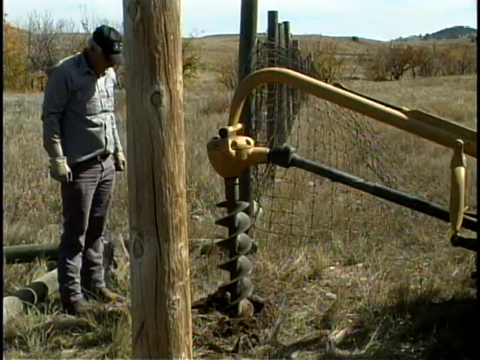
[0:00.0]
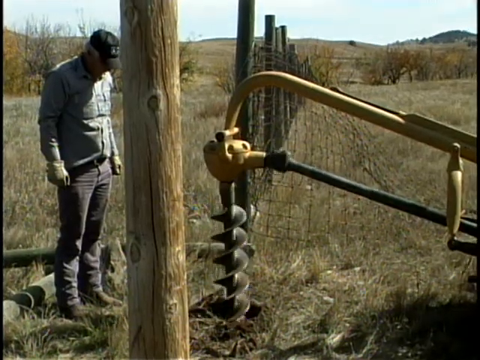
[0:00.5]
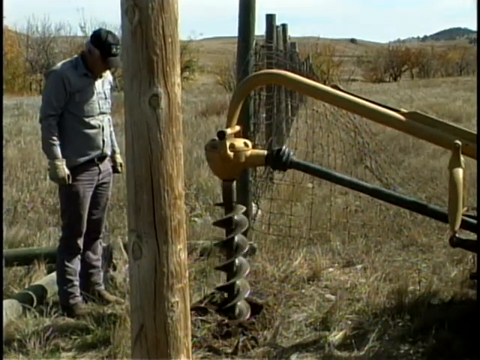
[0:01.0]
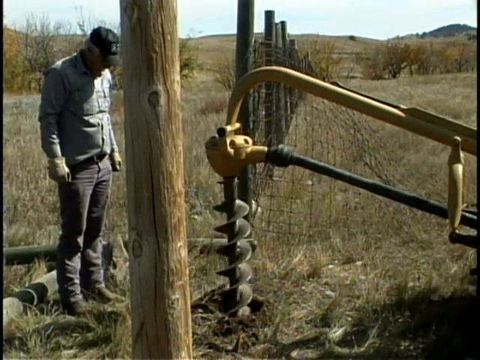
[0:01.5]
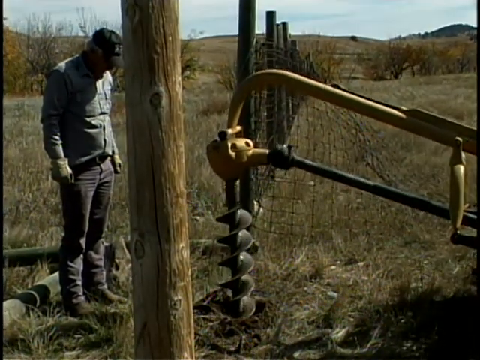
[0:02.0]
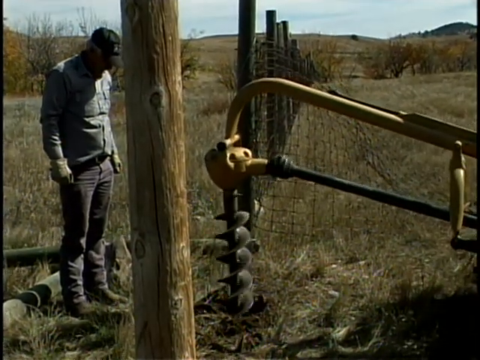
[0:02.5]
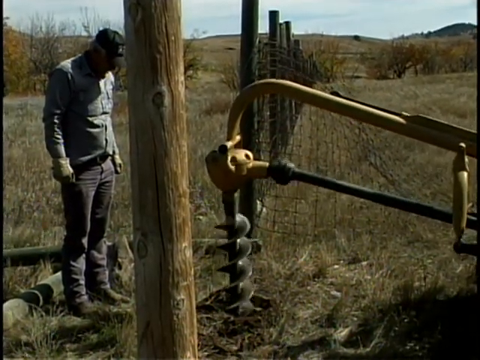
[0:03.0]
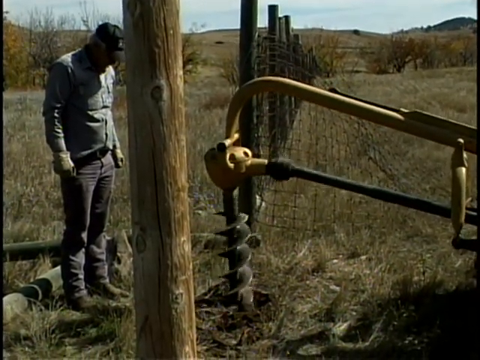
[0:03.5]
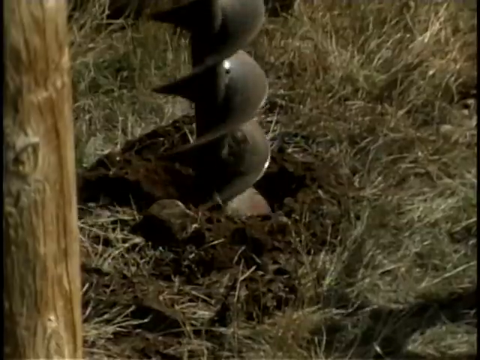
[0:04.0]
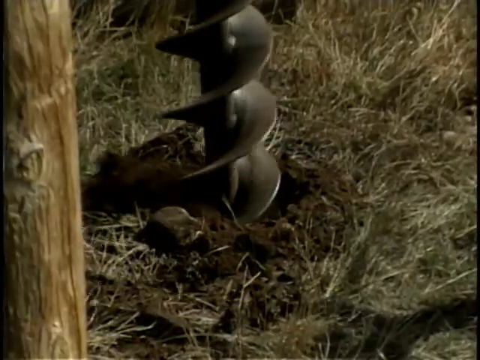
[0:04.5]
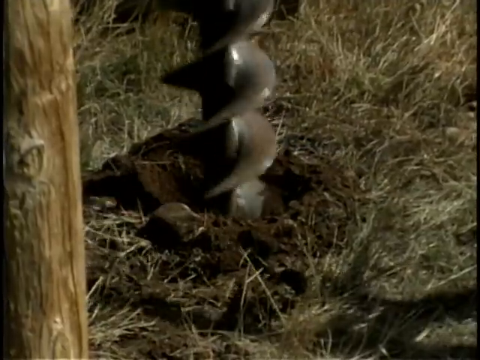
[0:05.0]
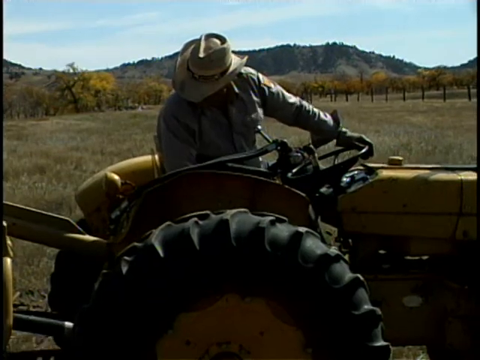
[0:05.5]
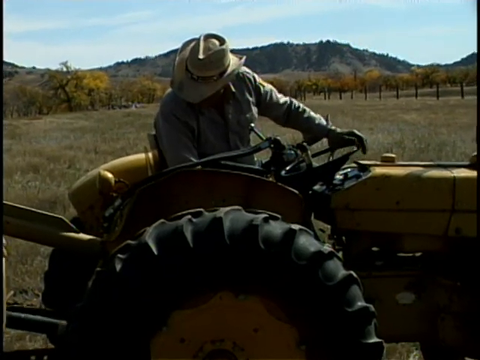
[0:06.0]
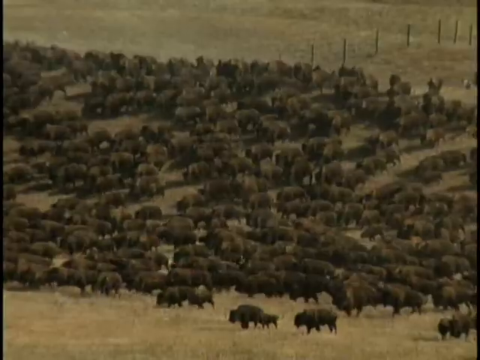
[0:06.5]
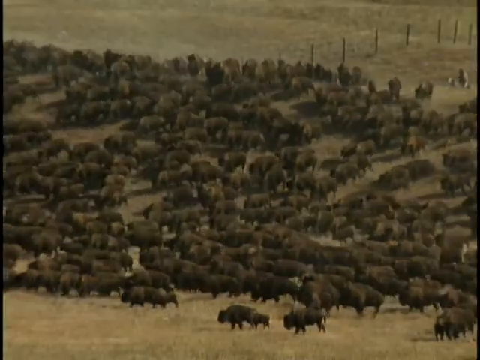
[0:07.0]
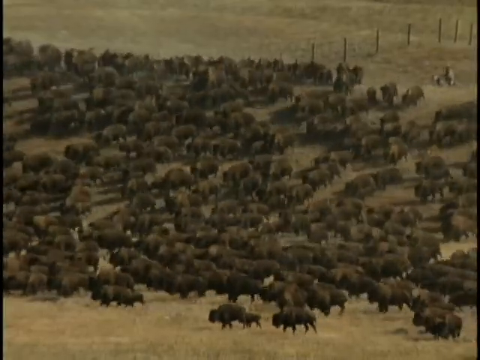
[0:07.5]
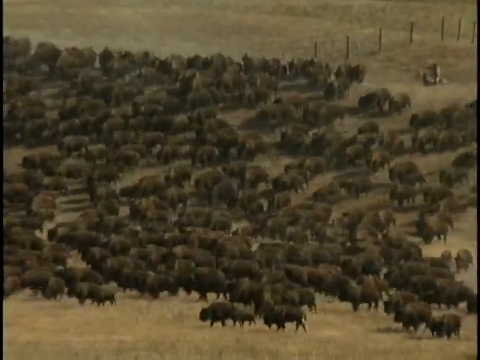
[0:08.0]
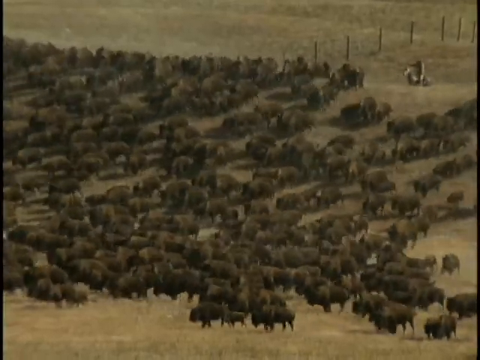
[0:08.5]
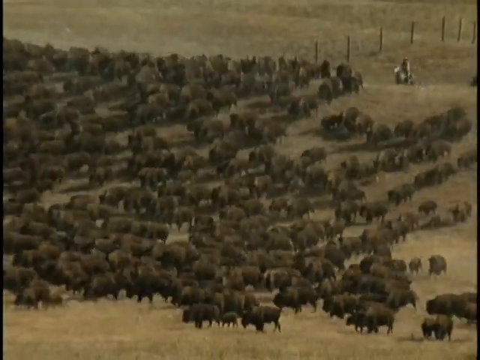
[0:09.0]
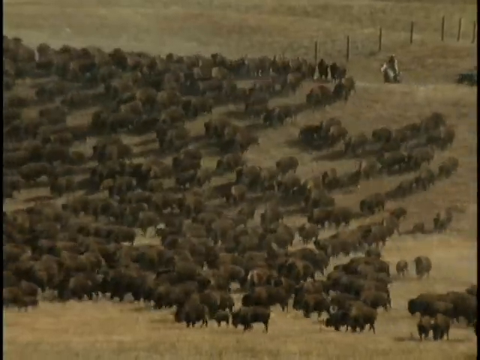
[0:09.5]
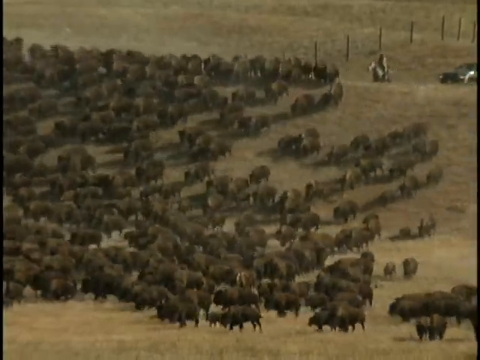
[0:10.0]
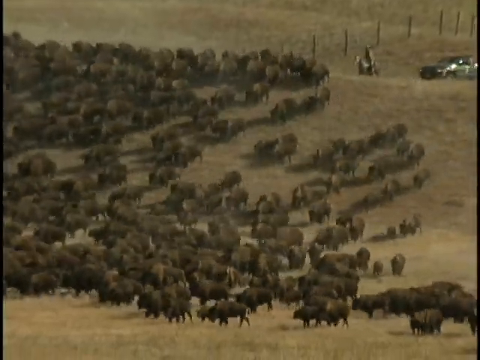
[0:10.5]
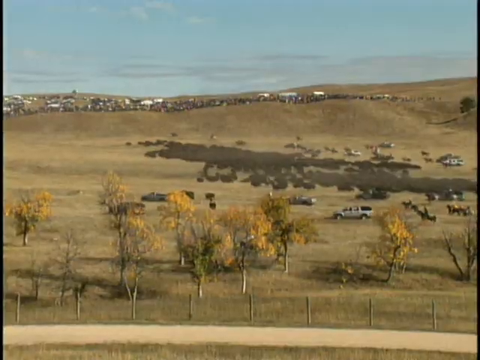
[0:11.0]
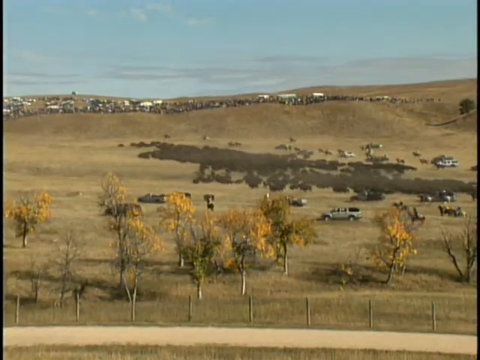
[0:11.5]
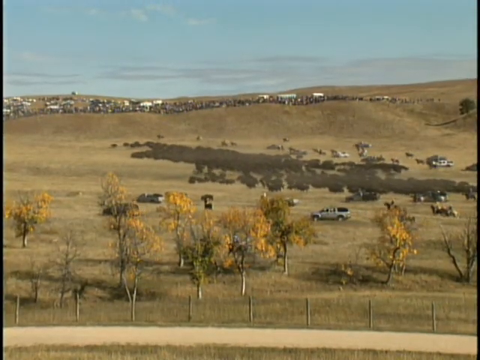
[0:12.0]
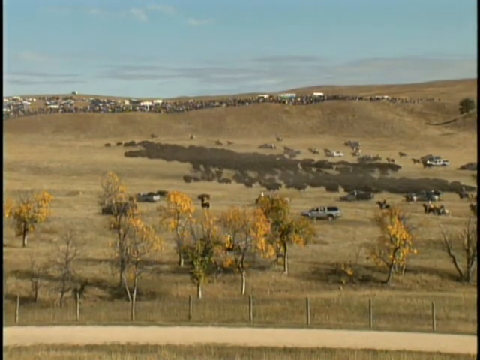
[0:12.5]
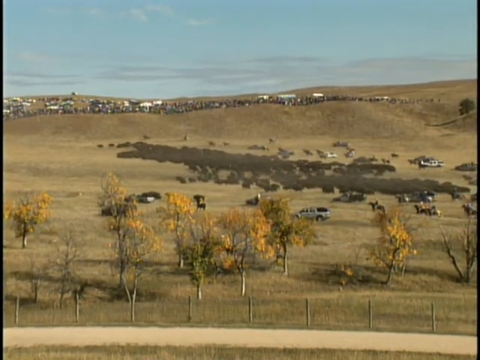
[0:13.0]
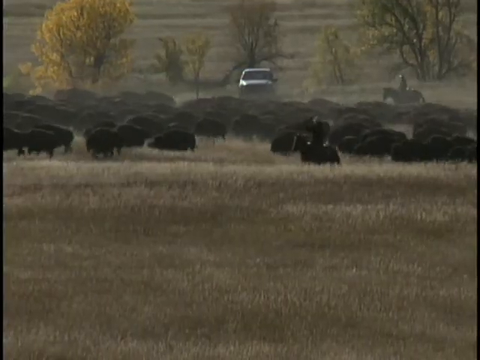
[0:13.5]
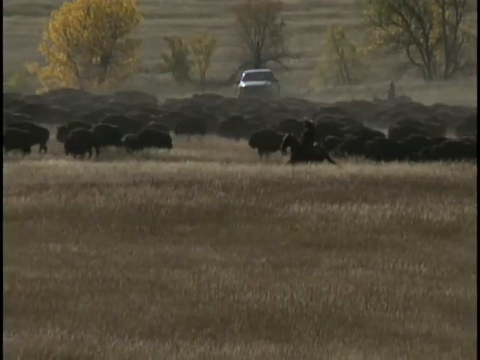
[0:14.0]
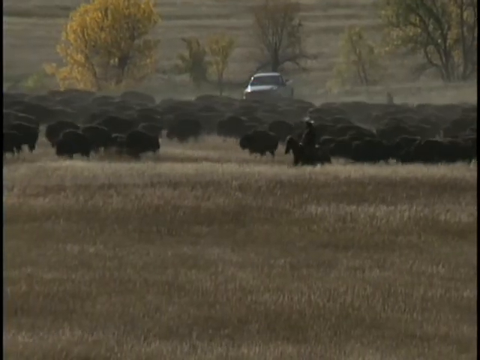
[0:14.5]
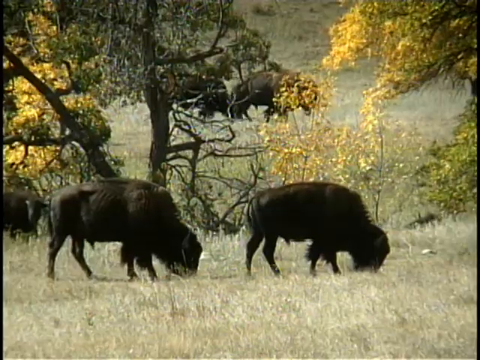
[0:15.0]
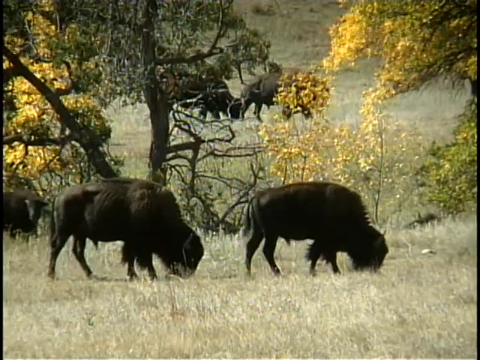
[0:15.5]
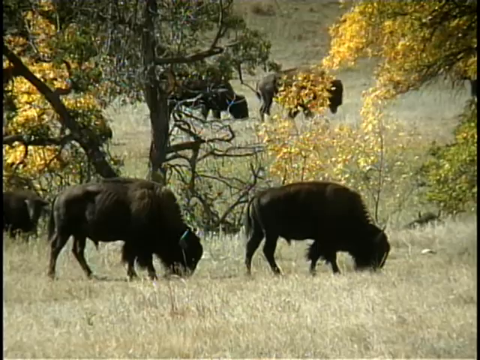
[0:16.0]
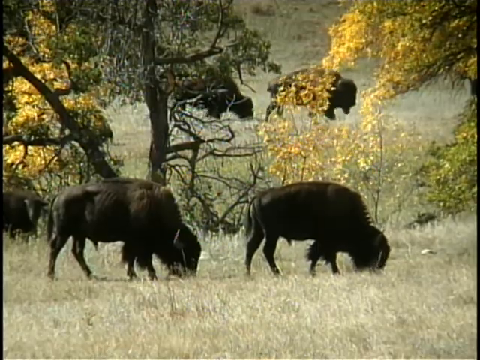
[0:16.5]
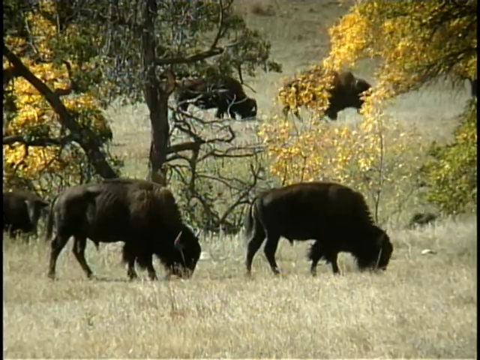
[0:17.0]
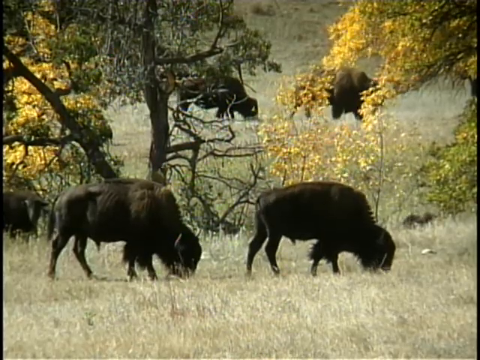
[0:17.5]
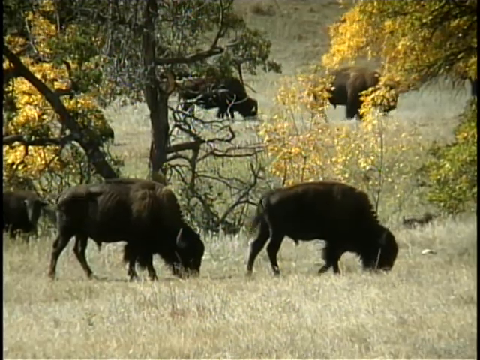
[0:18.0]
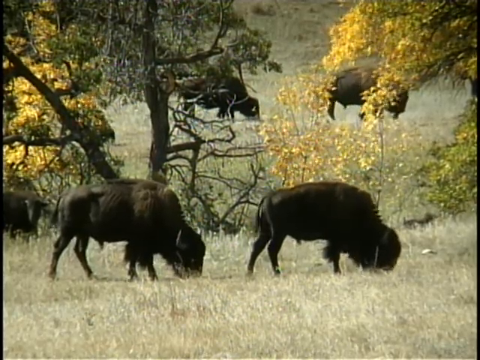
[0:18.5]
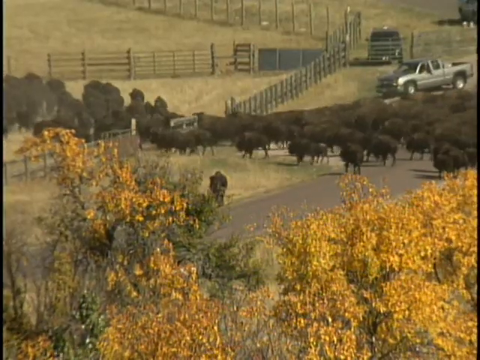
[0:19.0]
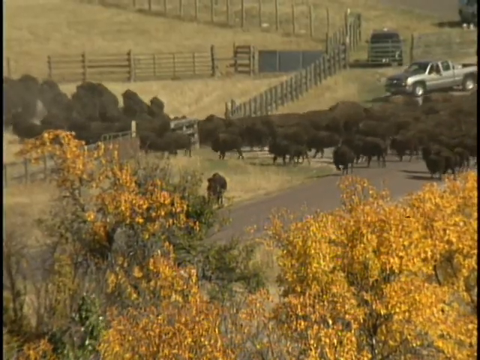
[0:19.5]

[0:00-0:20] A man stands wearing a hard glove on his hand, a black cap and a brown shirt. In front of him is a pole with cracks in it, and beside him a machine is drilling a hole. A fence beside the machine has broken down. The video focuses on the machine as it keeps drilling the hole; it turns out to be a tractor doing the drilling. Next, a man on a horse chases some animals that look like wild beasts. Several cars and a rider on a horse seem to be chasing the animals, and an animal enters a fenced area.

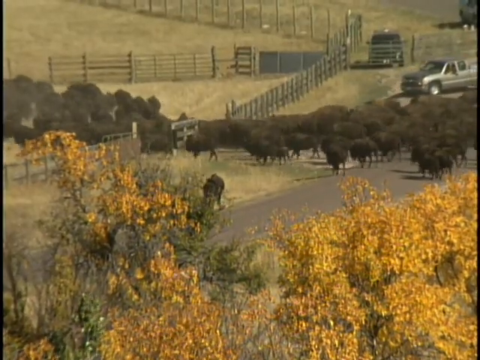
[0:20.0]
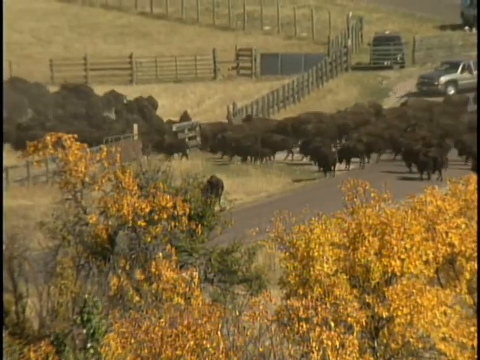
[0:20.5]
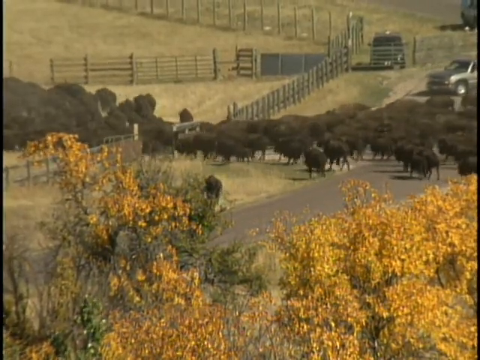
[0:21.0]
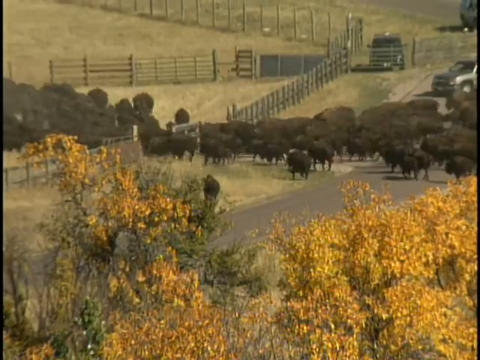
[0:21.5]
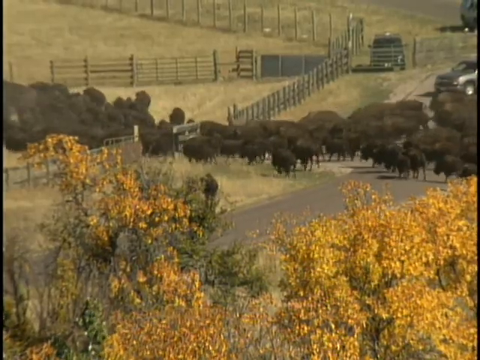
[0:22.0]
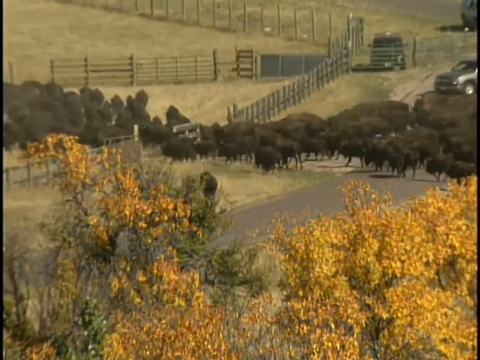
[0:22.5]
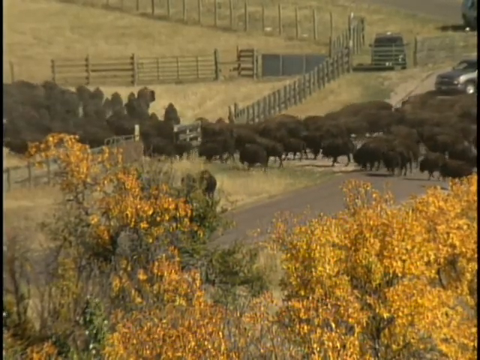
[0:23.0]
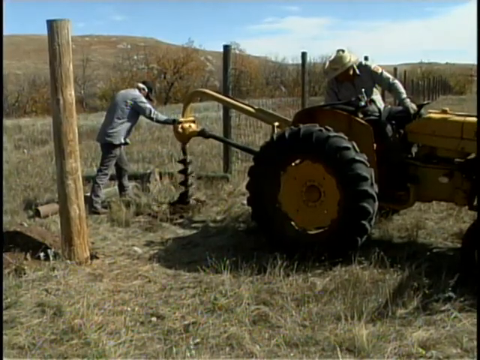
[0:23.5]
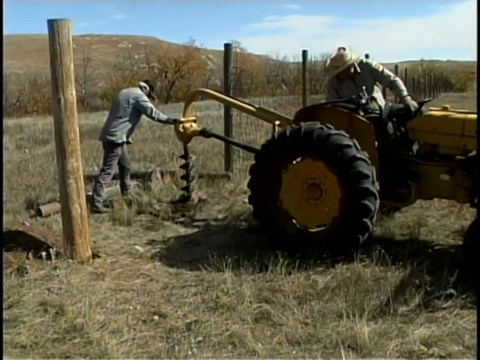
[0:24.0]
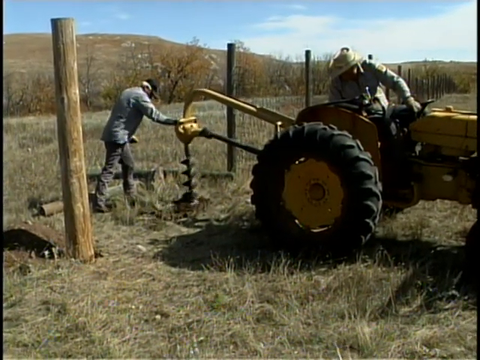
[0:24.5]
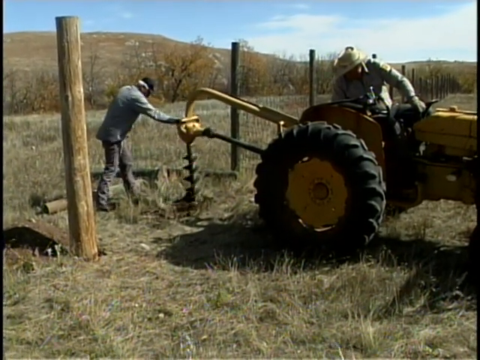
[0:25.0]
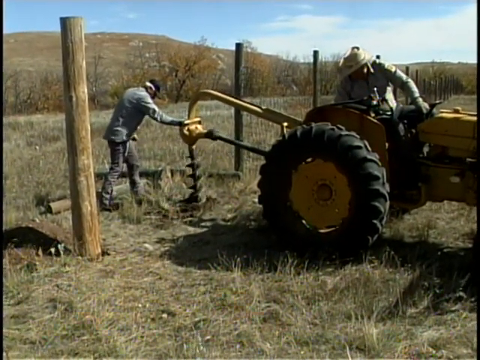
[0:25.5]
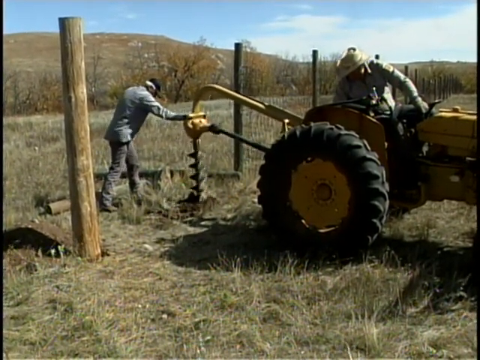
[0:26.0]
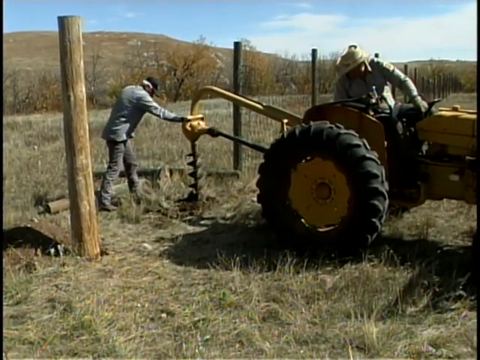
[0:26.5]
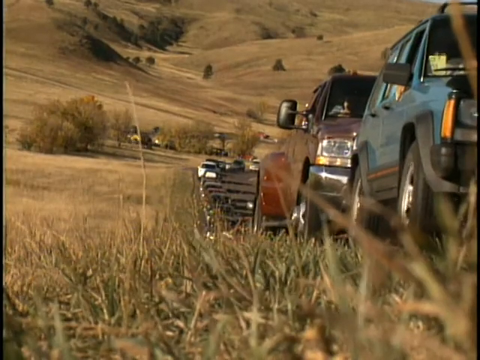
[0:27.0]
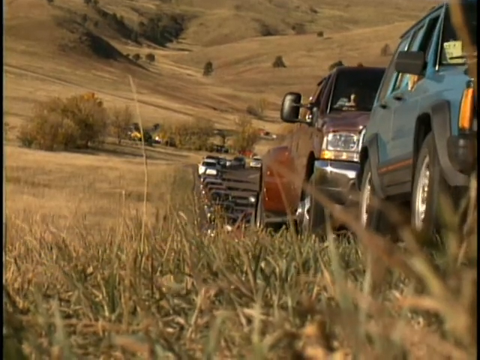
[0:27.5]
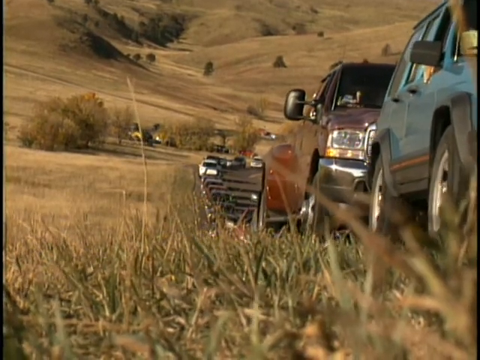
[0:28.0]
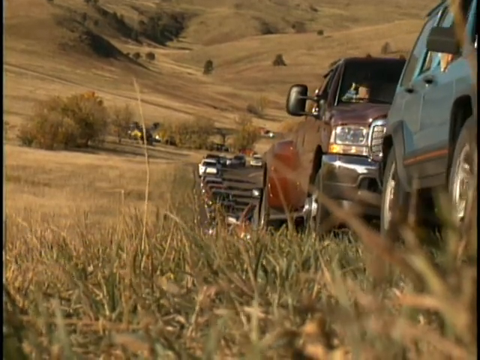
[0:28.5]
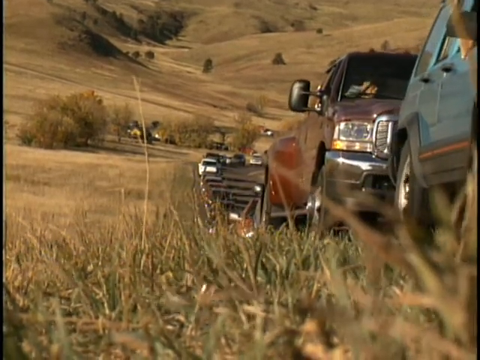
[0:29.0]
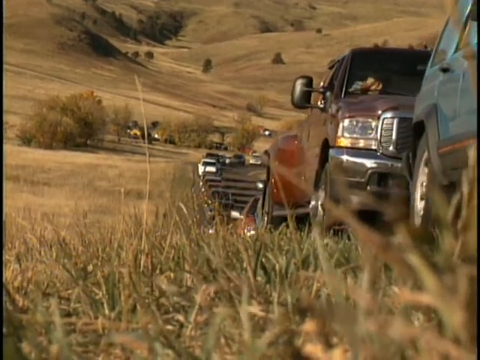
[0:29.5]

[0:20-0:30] Animals enter a fenced piece of land through two gates, directed by black vehicles and a man on a horse. The animals are all black, the same colour, and have hooves. The landscape looks like a large field with some small shrubs, mostly covered in grass. The focus shifts to the hole being drilled: there is a tractor with a driller attached, and a yellow tractor with a man in a cap seated on it, using the tractor to drill the hole. The setting then changes to another area, where a long procession of vehicles approaches the camera.